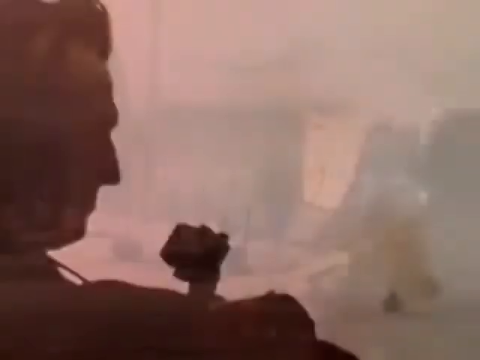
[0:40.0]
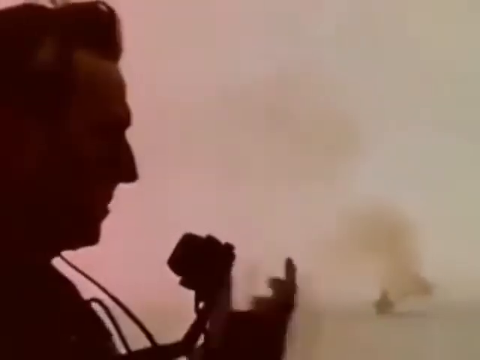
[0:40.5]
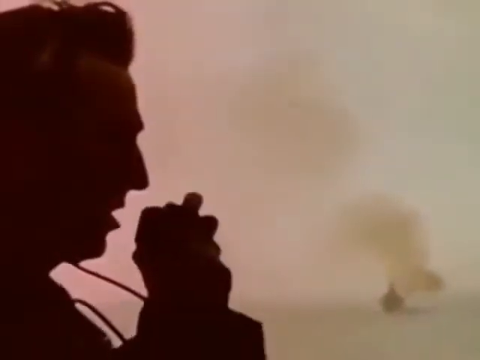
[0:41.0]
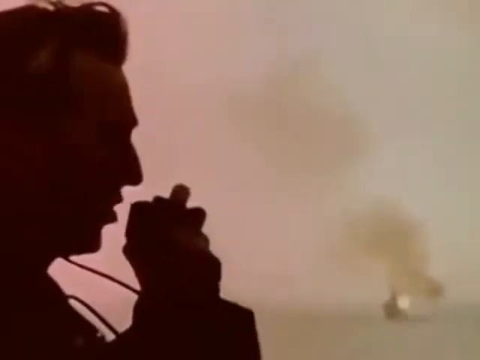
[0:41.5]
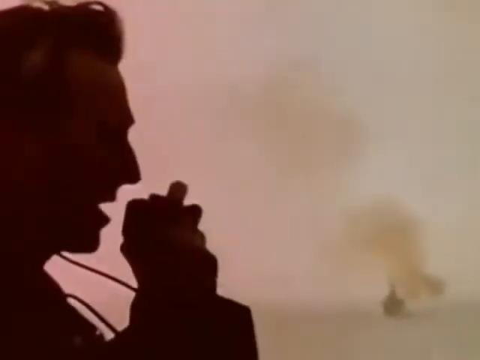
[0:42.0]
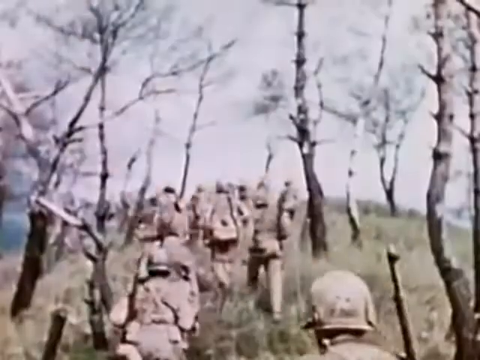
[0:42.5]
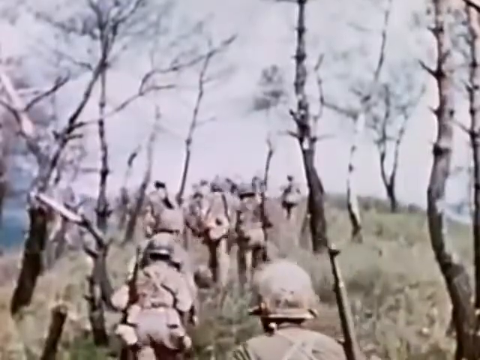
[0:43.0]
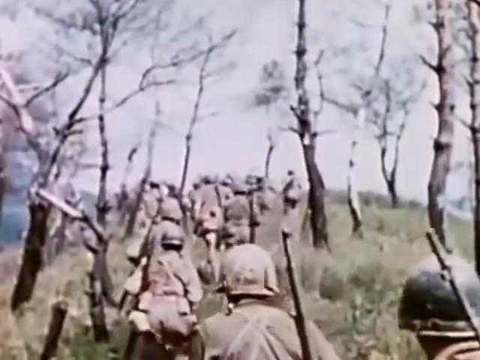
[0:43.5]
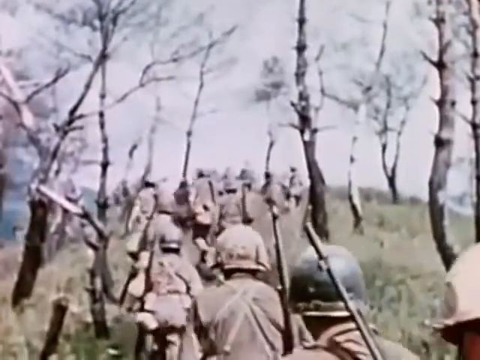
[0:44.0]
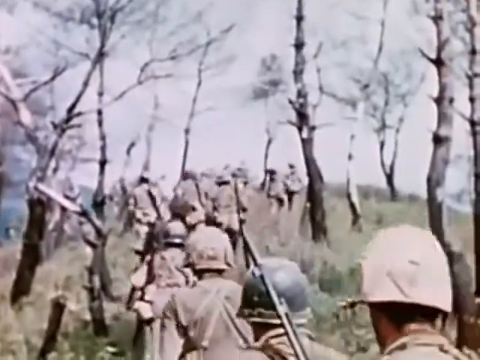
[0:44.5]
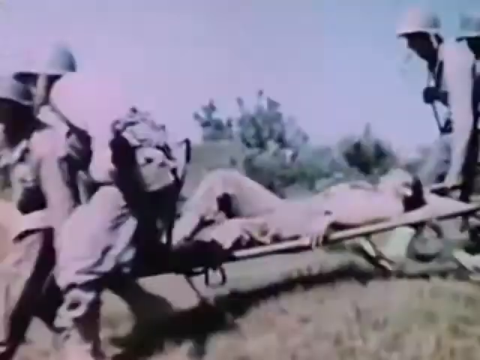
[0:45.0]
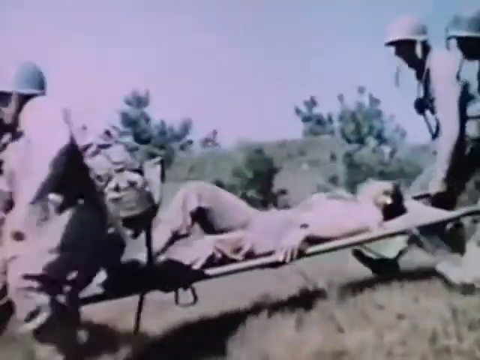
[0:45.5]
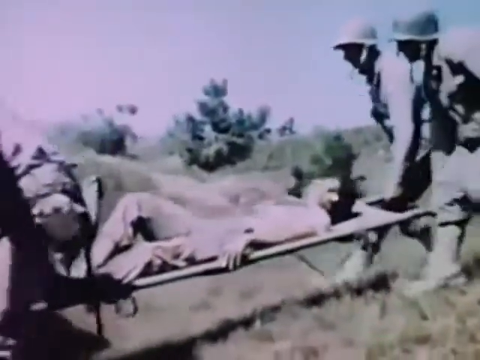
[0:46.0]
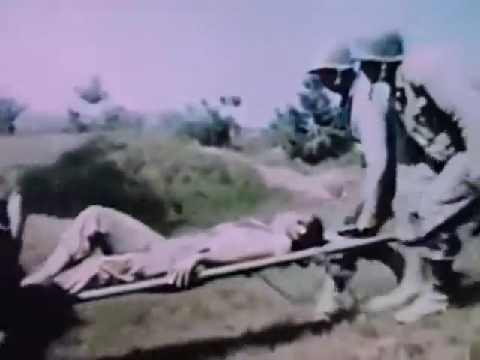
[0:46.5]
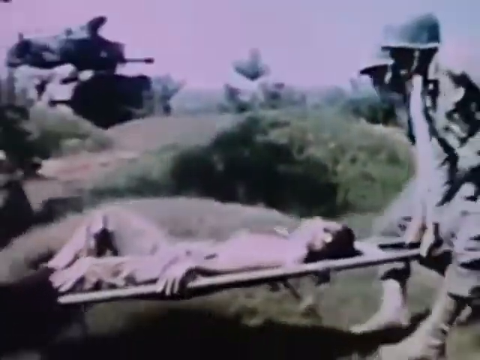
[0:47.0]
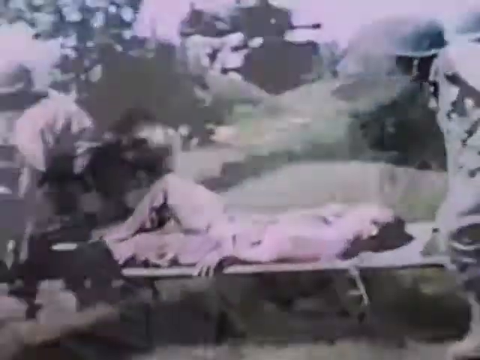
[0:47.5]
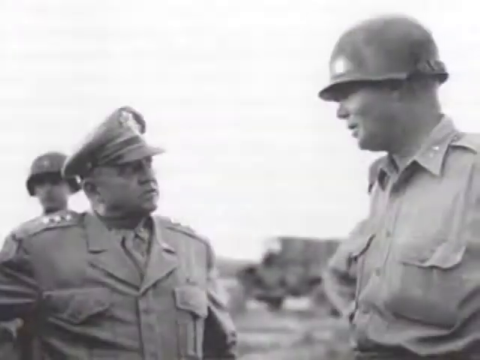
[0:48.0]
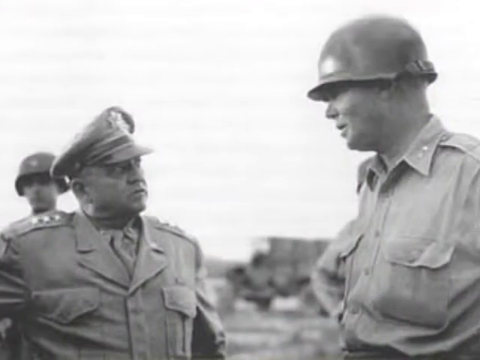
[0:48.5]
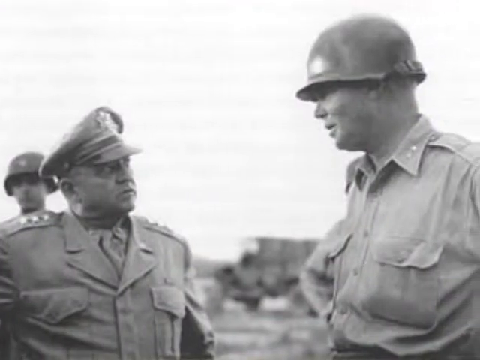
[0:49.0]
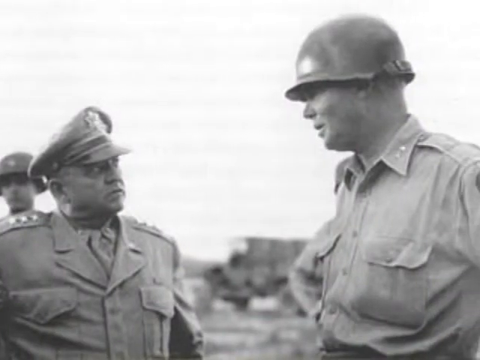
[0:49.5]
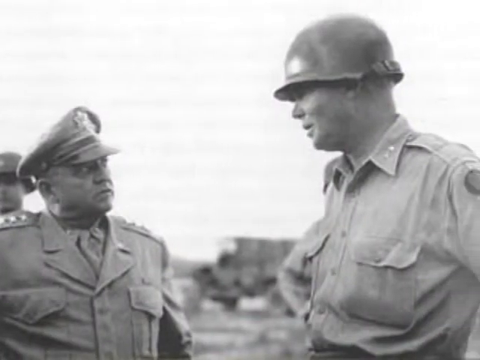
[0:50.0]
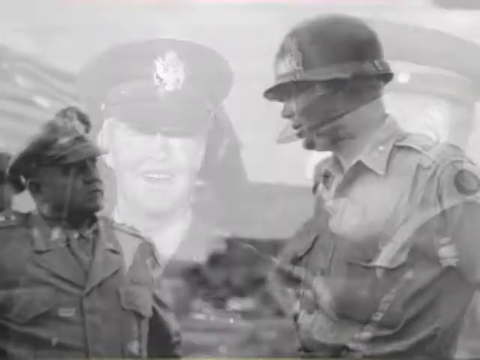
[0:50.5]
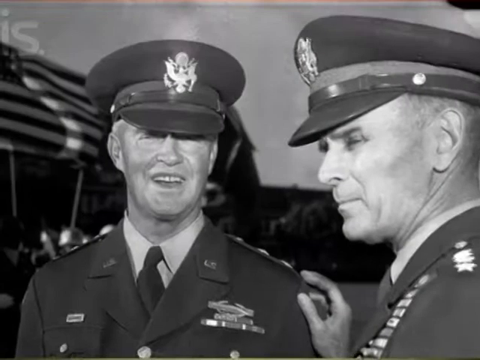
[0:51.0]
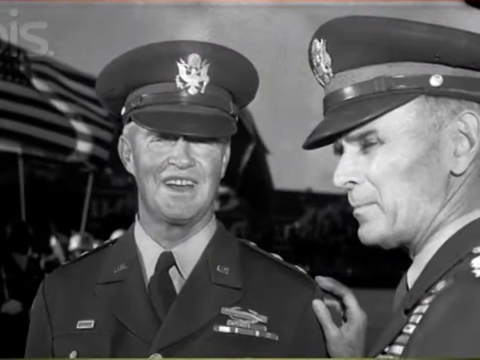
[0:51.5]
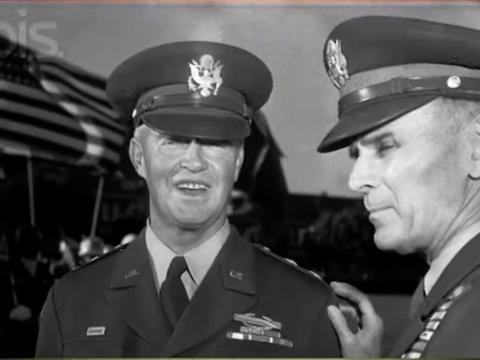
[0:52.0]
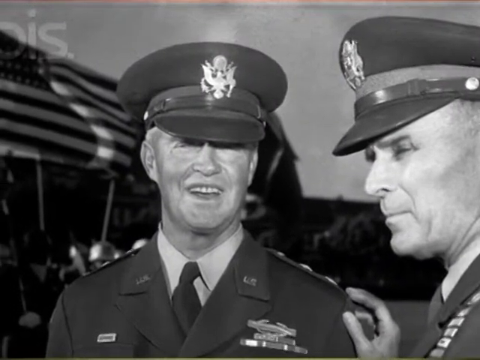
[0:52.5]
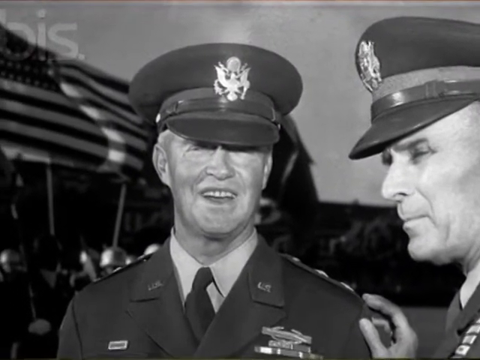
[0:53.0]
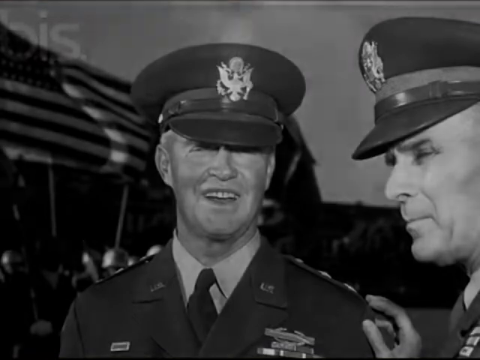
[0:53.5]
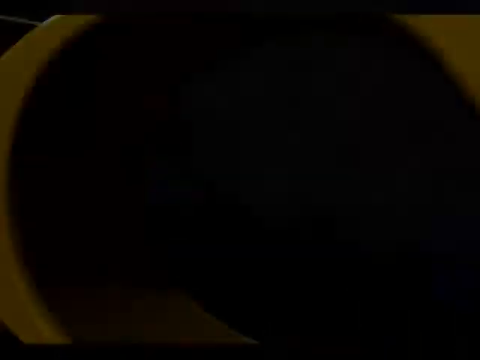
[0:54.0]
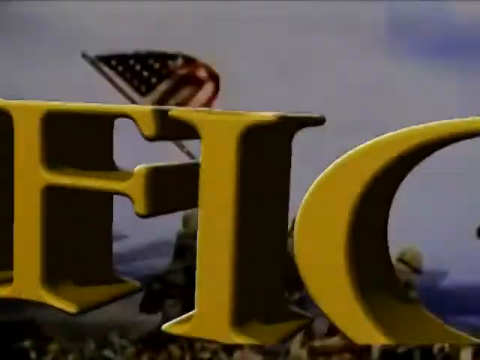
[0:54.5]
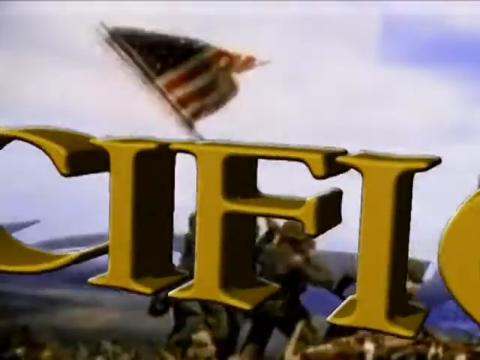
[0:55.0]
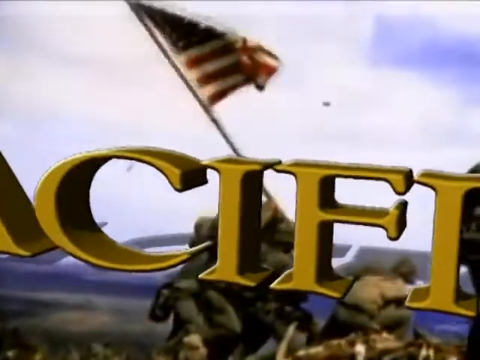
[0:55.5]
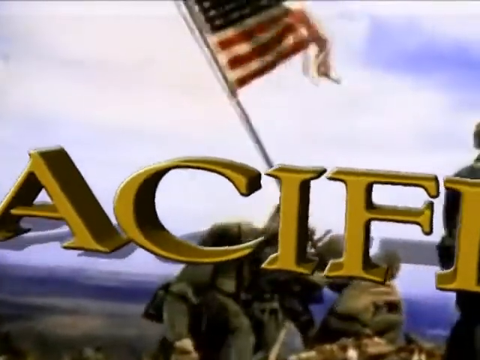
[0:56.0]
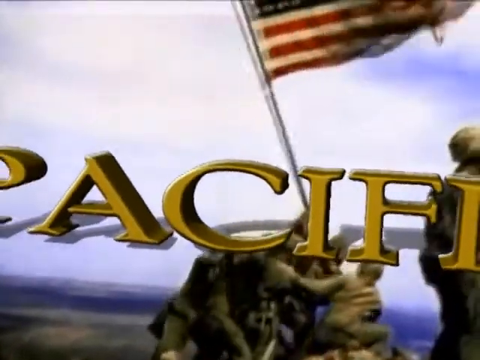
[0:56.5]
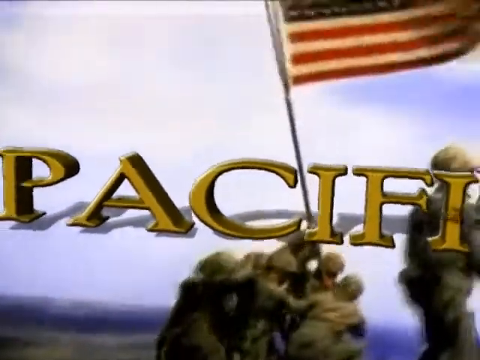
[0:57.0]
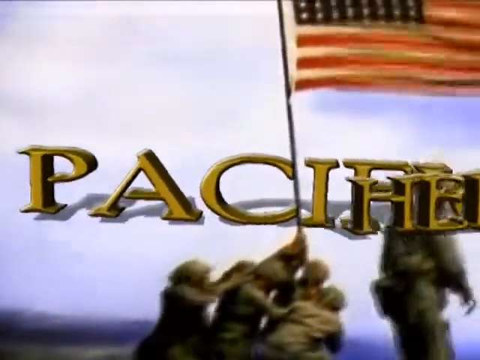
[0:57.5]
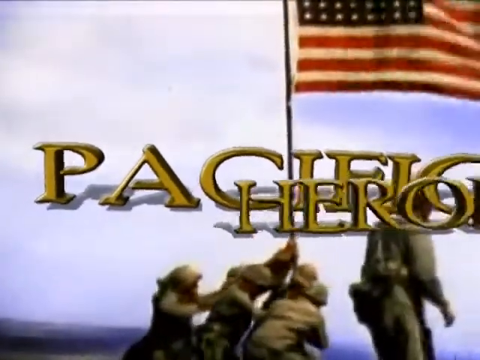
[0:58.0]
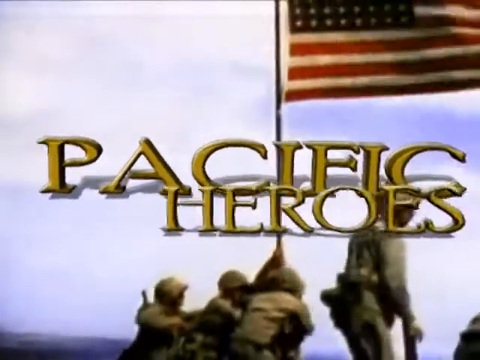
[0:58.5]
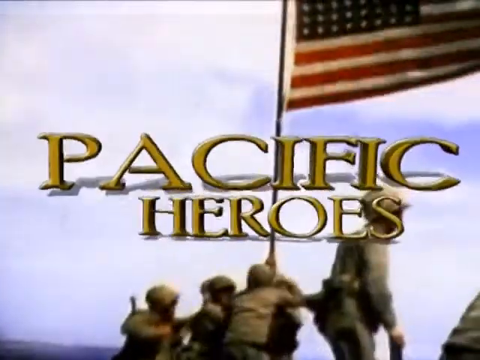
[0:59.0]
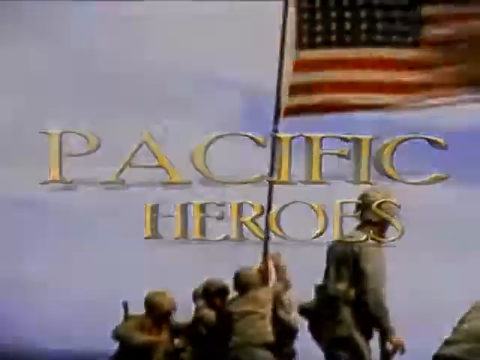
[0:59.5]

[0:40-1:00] A man looks like he is speaking into a walkie talkie or some kind of microphone. He appears as a black silhouette, with a lot of white, dusty-looking fog in the background and what looks to be some kind of explosion. A group of army men walk between a bunch of trees, holding their guns. Some of the military men carry someone who looks like they might be injured. A very old black and white photo shows some military men wearing hats and their uniforms. Another photo shows more army men in their uniforms, with one man smiling while another touches his shoulder. A transition leads to military men walking and trying to raise an American flag, with gold text reading "Pacific heroes".